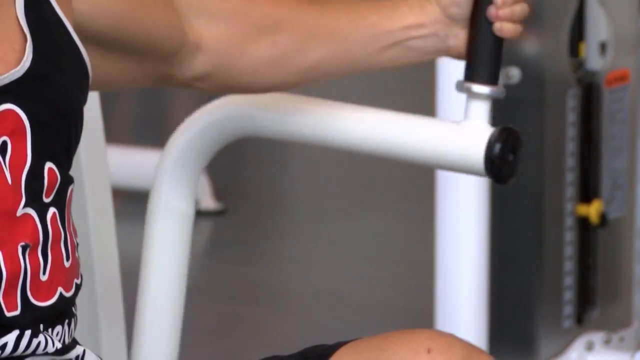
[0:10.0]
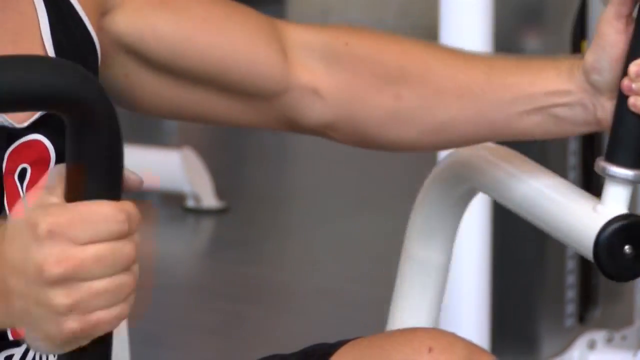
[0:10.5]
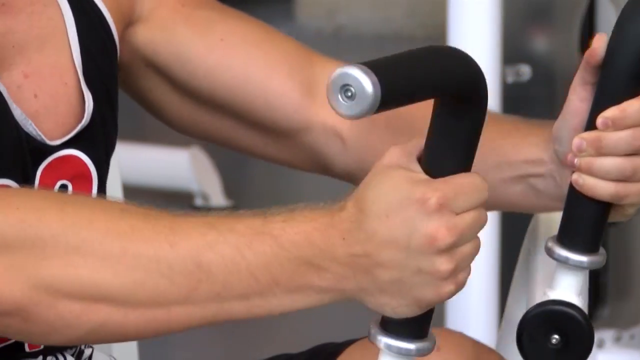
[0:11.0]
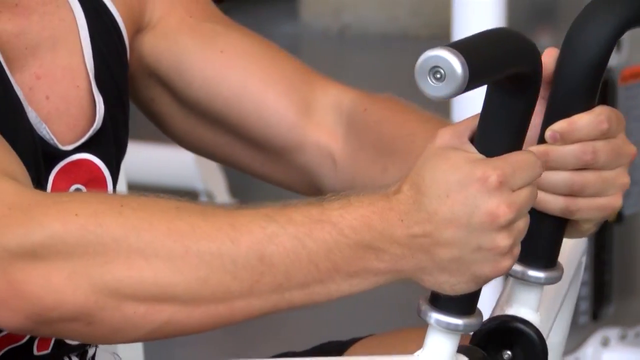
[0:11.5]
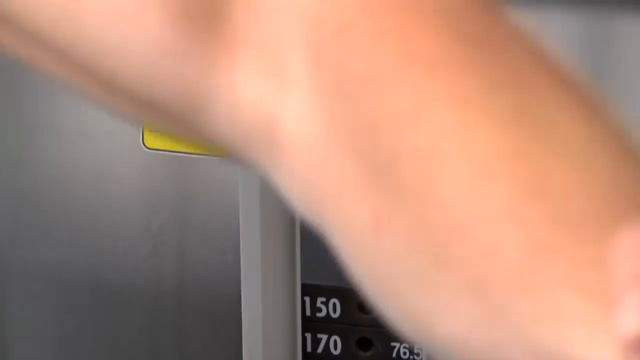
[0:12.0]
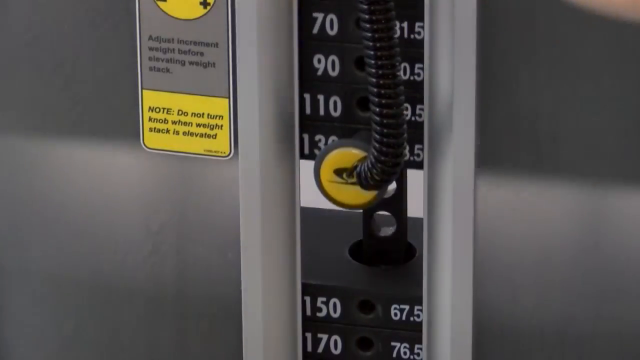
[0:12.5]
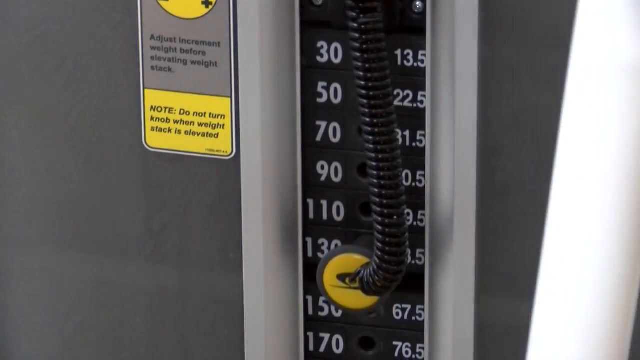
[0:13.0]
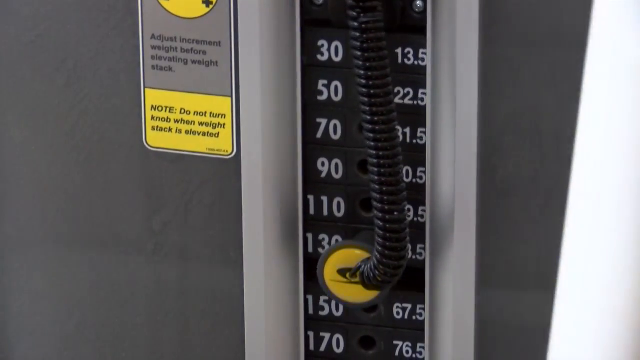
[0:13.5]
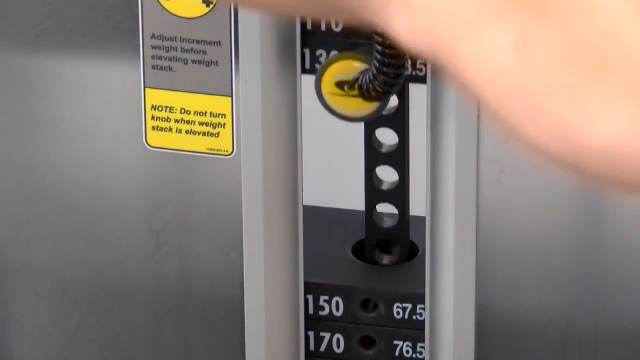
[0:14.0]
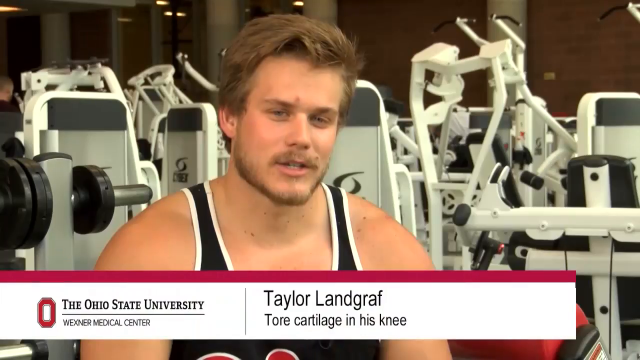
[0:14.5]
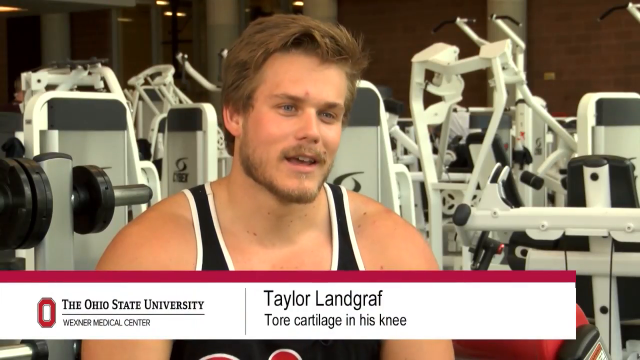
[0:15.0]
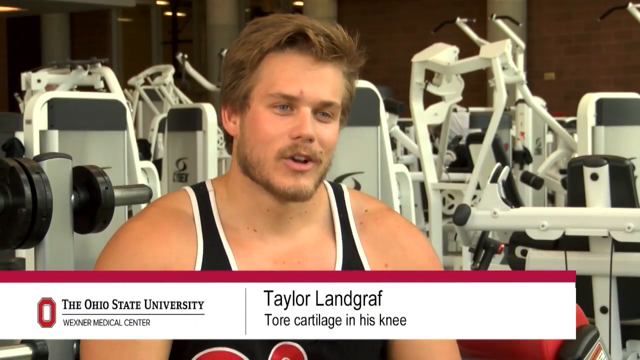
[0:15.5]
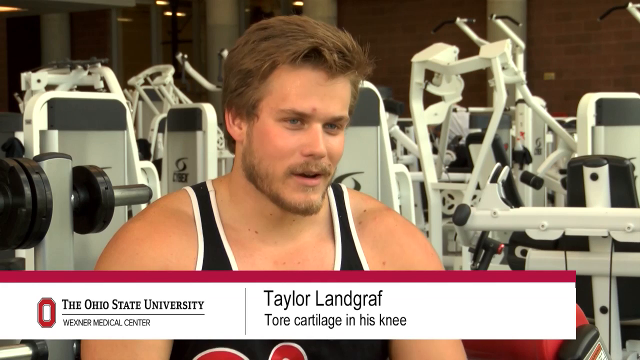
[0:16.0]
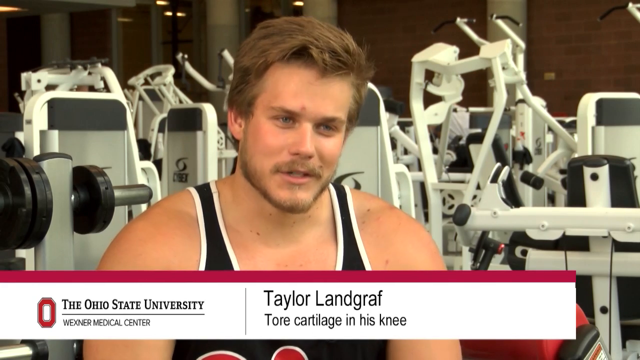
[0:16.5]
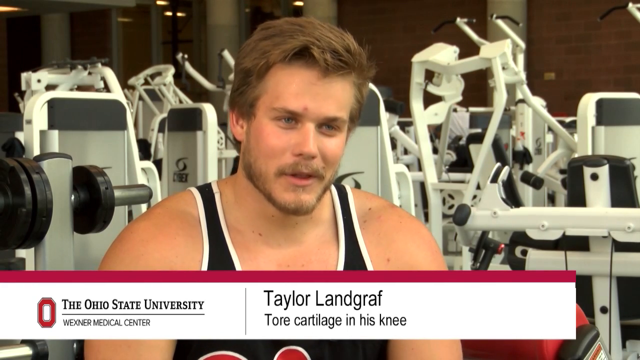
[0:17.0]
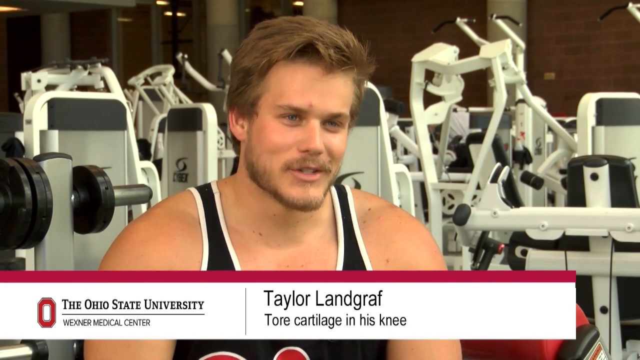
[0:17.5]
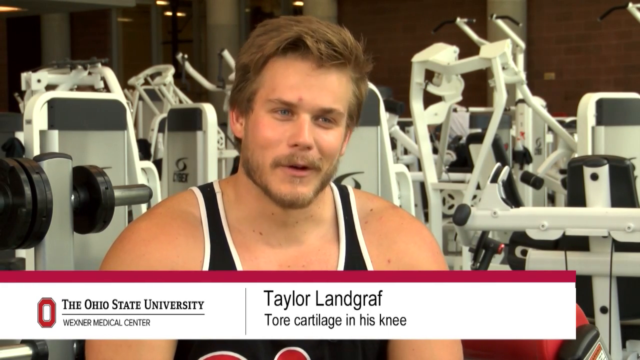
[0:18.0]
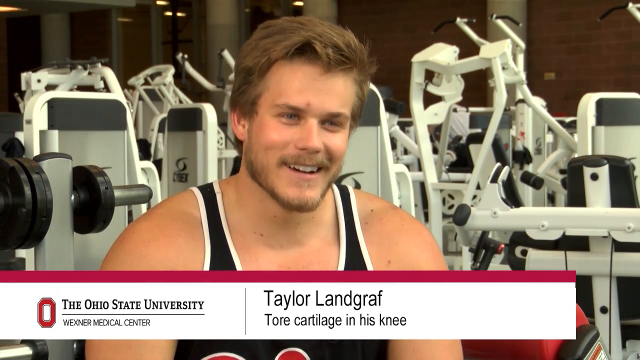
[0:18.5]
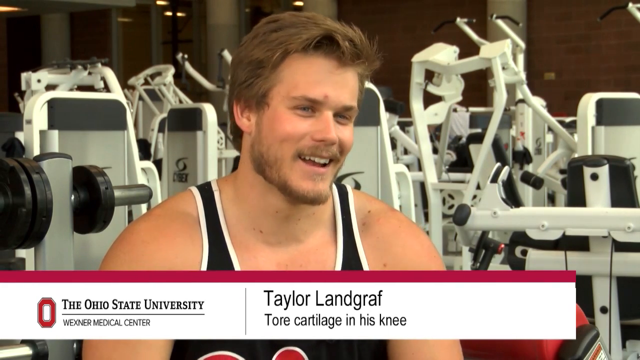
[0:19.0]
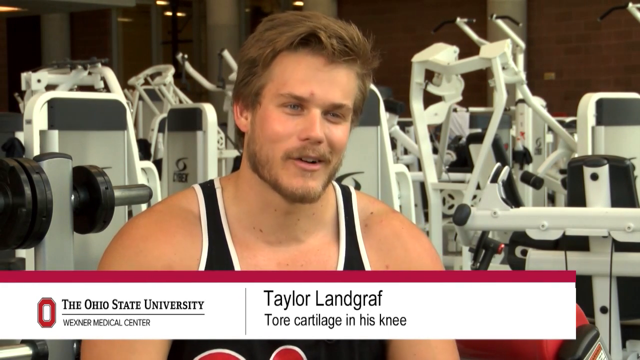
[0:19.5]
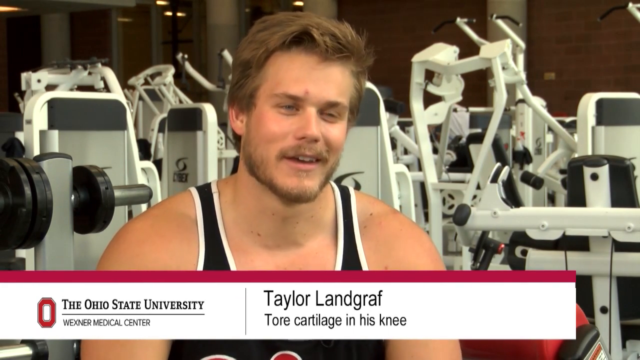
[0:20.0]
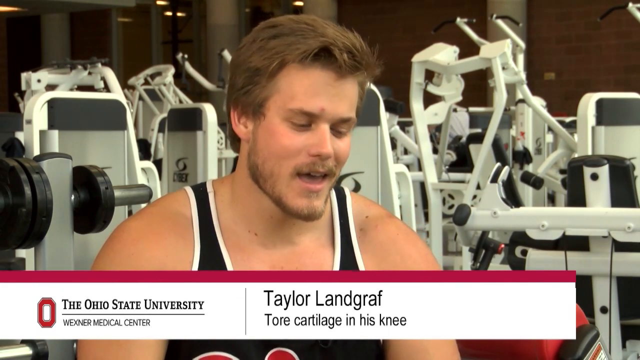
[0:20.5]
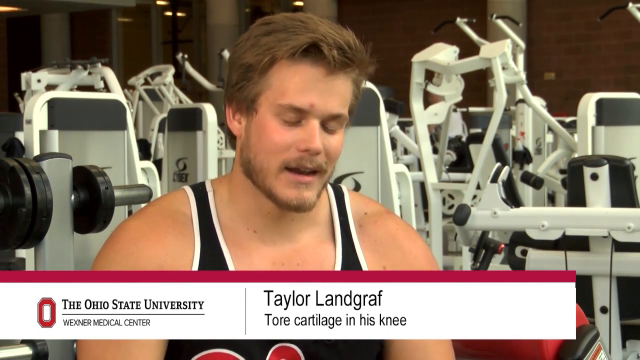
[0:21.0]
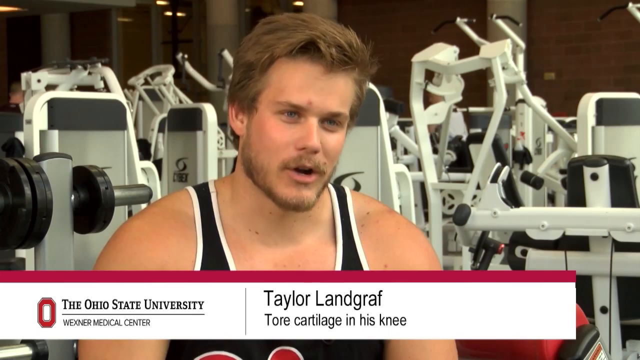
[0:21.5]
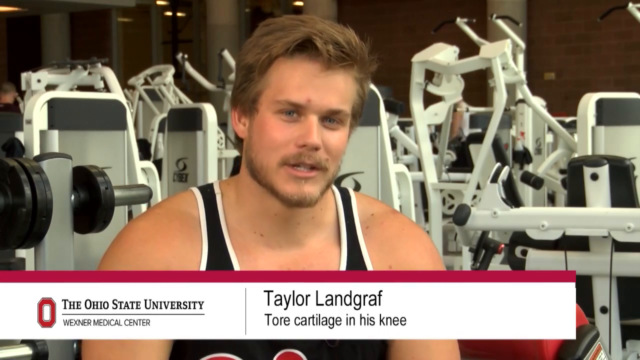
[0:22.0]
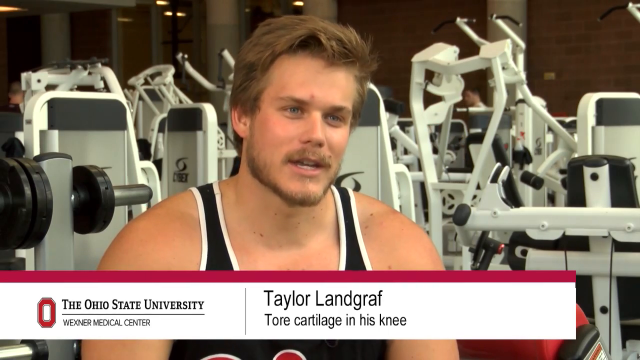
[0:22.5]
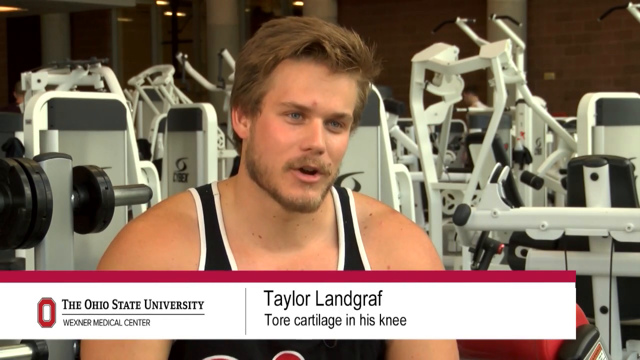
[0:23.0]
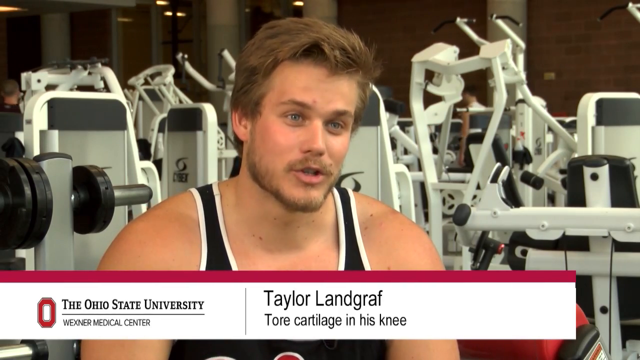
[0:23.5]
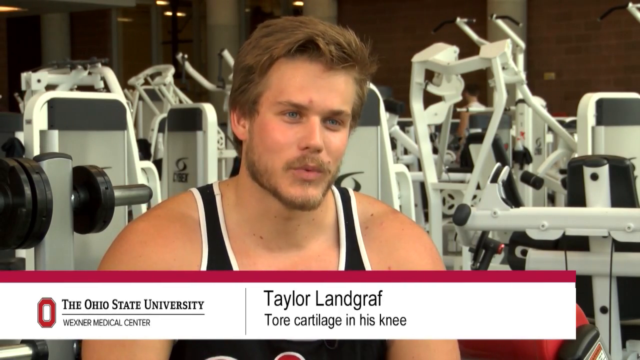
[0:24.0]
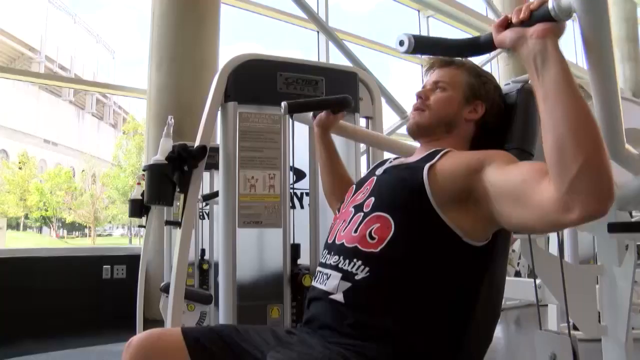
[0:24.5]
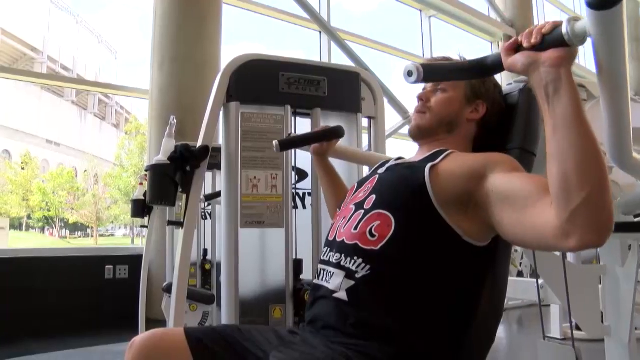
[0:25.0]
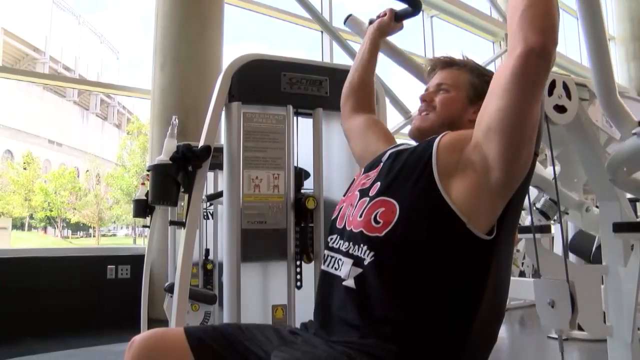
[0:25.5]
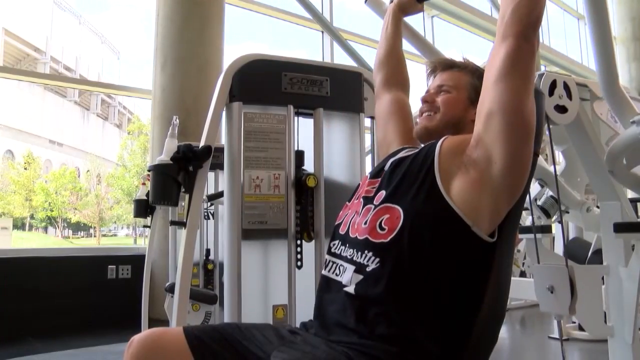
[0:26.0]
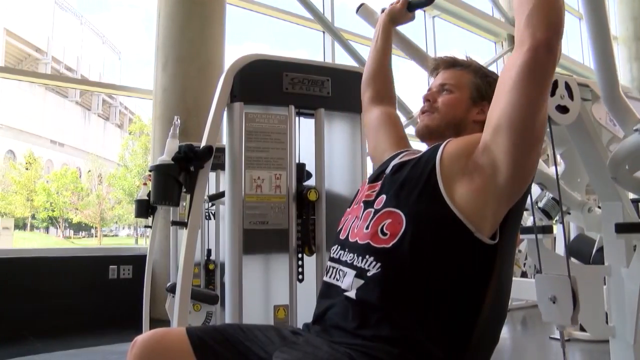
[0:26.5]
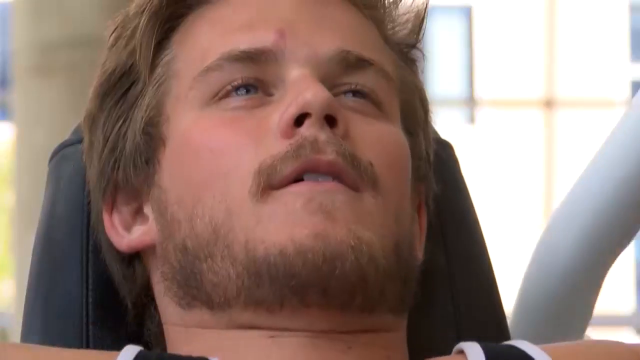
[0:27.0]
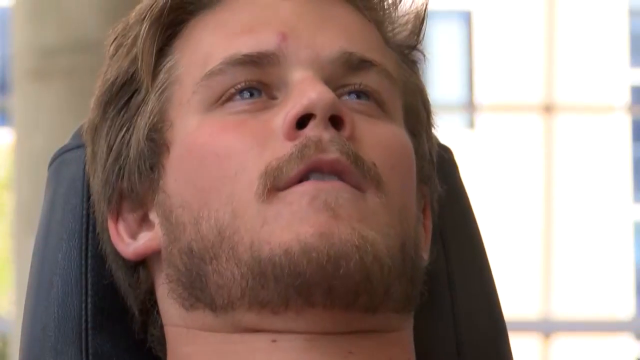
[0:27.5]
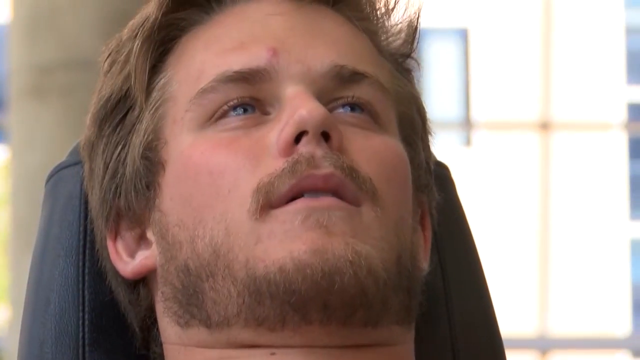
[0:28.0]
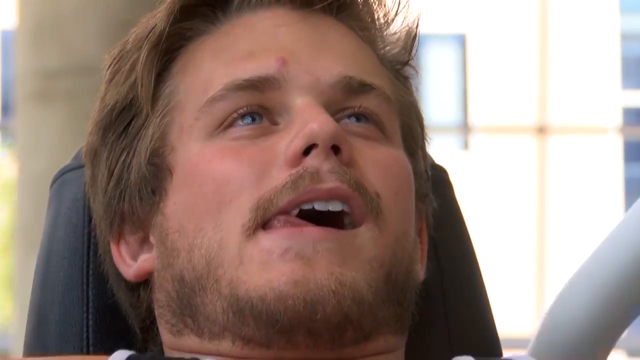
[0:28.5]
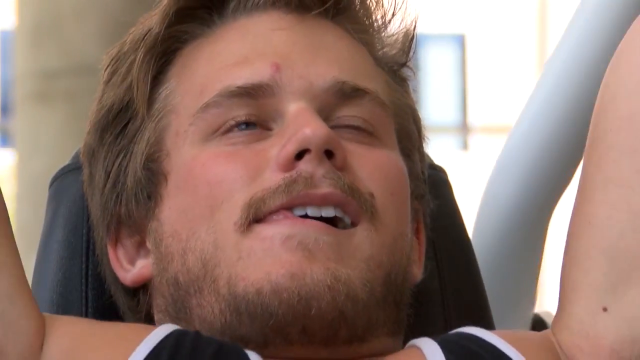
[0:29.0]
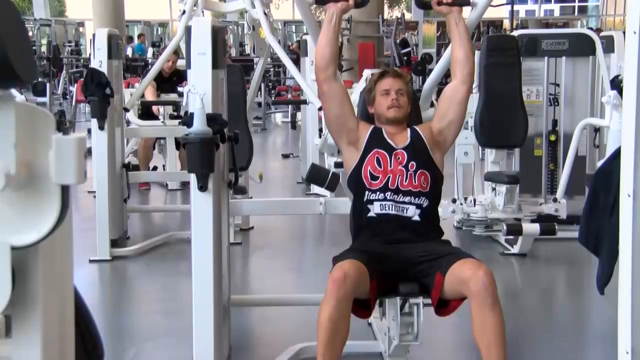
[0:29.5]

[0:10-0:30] The camera focuses on the weights themselves: the pin-loading machine is pinned at 130 pounds. As the man pulls, the weights rise into the air and then begin to fall. The image changes to an interview-style shot of the man showing his shoulders and face. He wears the black tank top and has a beard, a moustache and brown hair. Along the bottom of the image is a white bar with the Ohio State University logo and the university's name on the left, and on the right the man's name with "tore cartilage in knee" and smaller black text underneath. He speaks to the camera, smiling and nodding as he answers the question, quite dynamic with his head and eye movements, looking at the person behind the camera rather than straight into the lens. The image then changes to a side profile of him using a chest press machine, facing the left of the image in the same outfit. He holds the bars and pushes his hands up above his head, stays static for a few seconds, then slowly pulls his arms down until his elbows are in line with his chest and parallel to the floor. The camera then focuses on his face; he is concentrating, with his tongue stuck out slightly toward the left of the image.